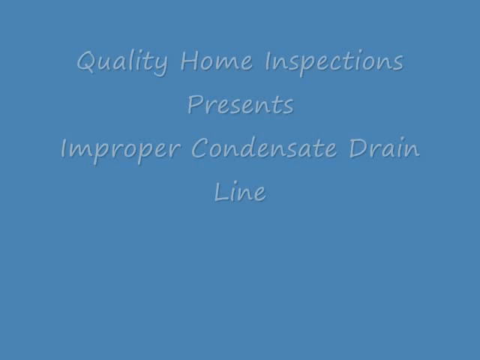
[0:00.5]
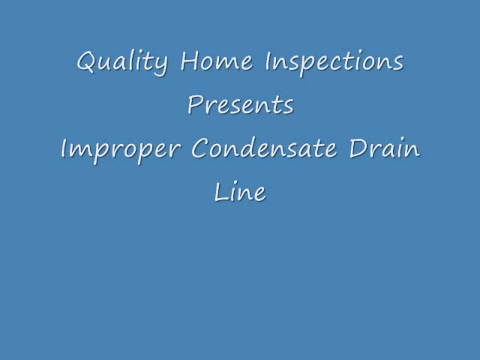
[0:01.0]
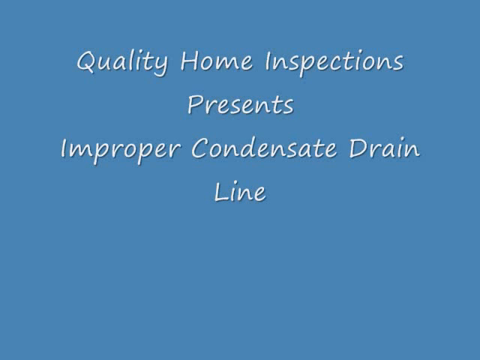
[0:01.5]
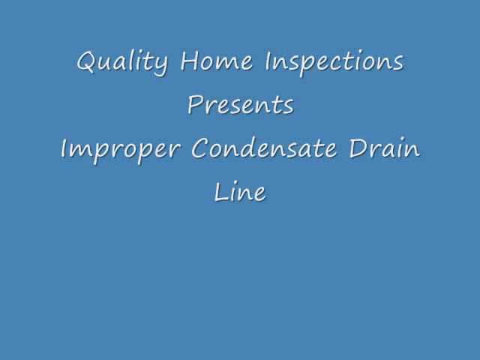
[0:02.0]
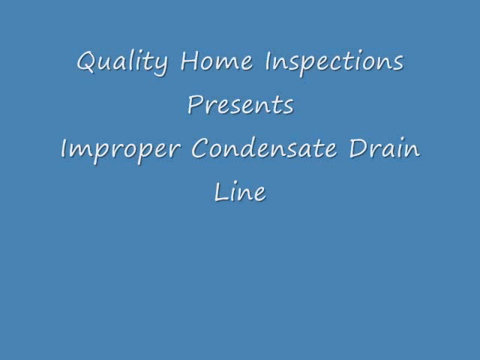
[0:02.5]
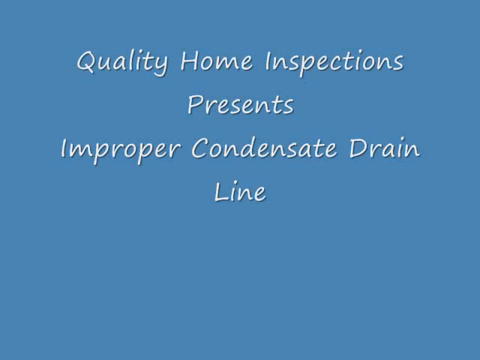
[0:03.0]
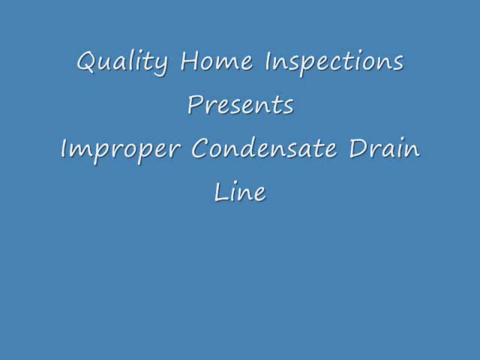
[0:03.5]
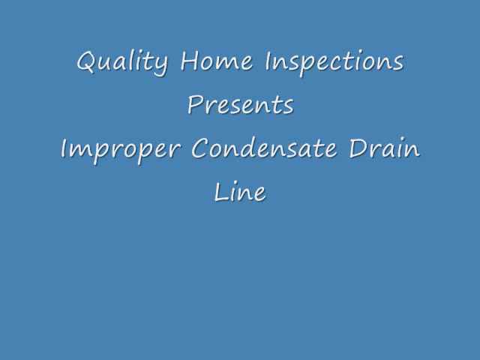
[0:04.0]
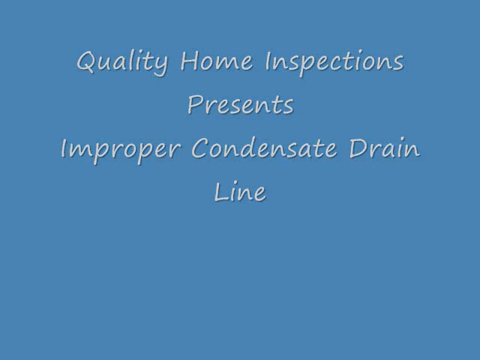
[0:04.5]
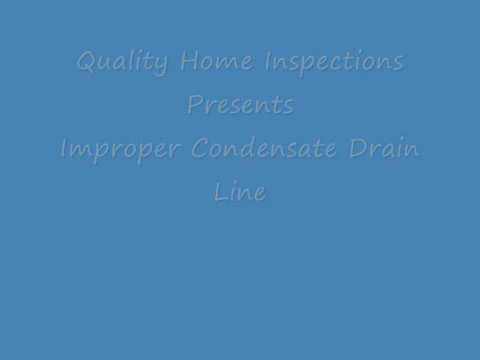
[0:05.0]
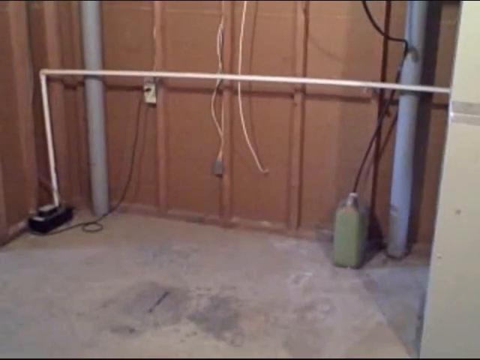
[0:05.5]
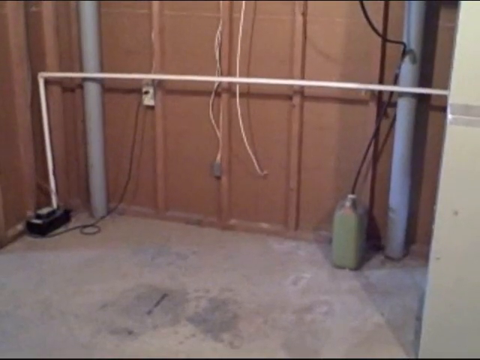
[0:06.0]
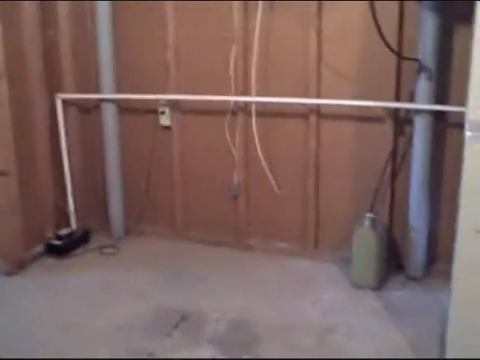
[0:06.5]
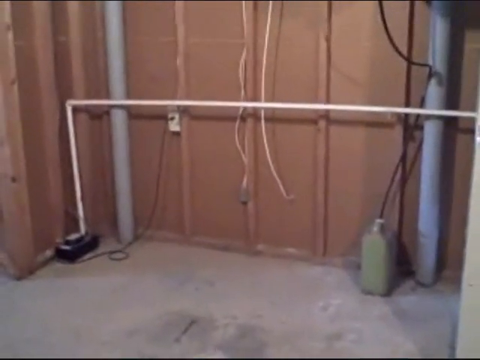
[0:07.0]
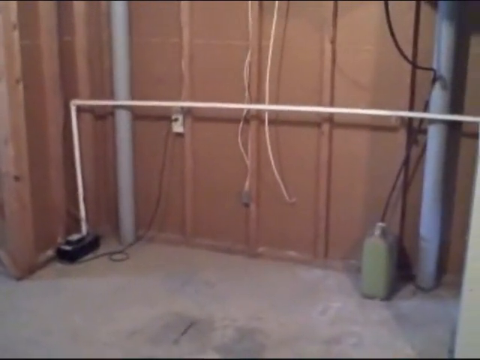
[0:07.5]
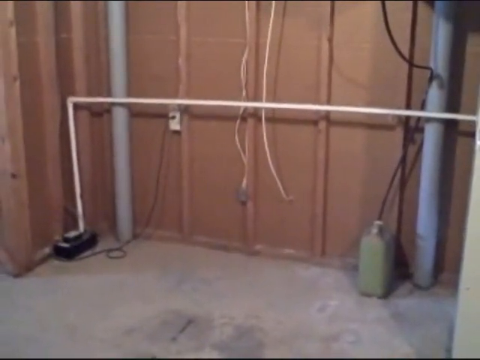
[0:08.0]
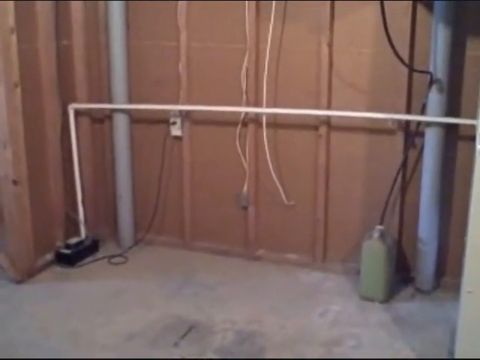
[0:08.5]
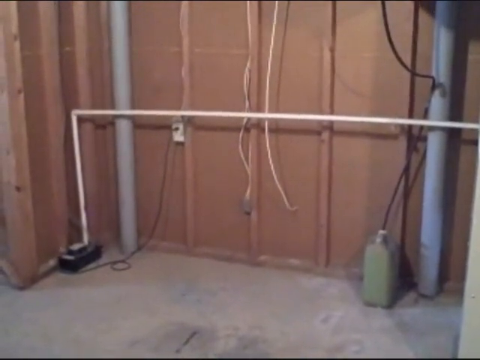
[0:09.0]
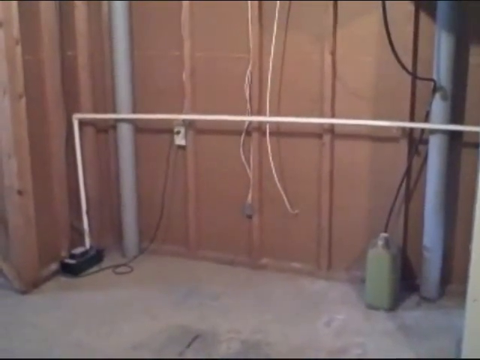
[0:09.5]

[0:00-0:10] A person shakes a phone while recording a room with some red interior in front and pipes and cables, which is presumably a basement, though the video does not show more of it. The camera shakes violently while filming.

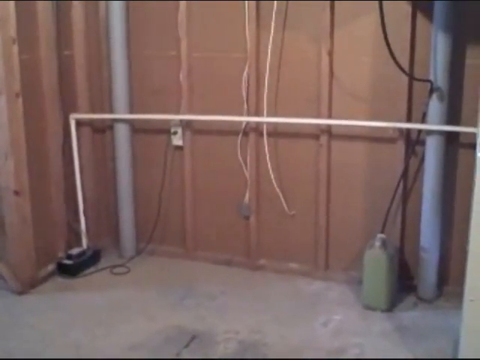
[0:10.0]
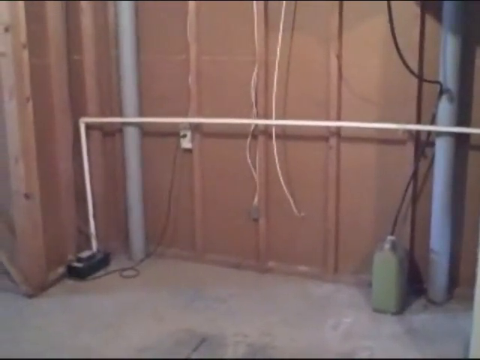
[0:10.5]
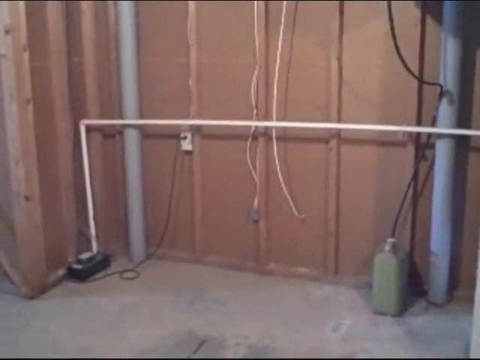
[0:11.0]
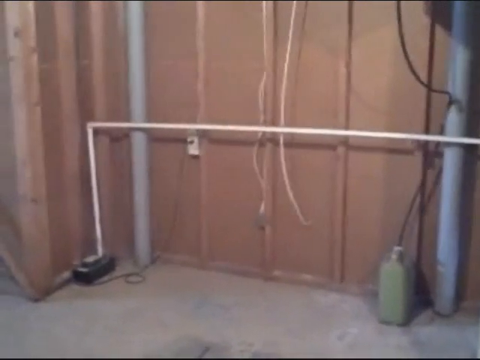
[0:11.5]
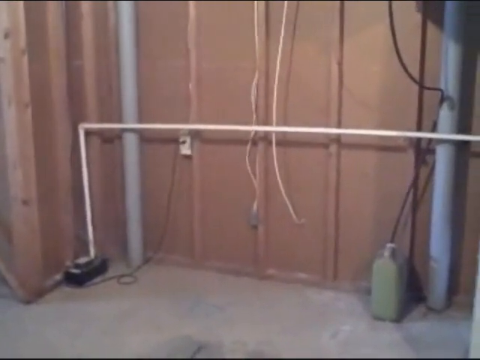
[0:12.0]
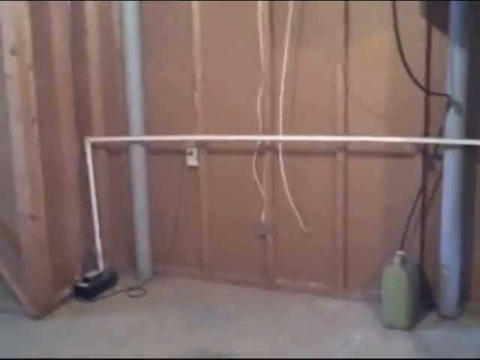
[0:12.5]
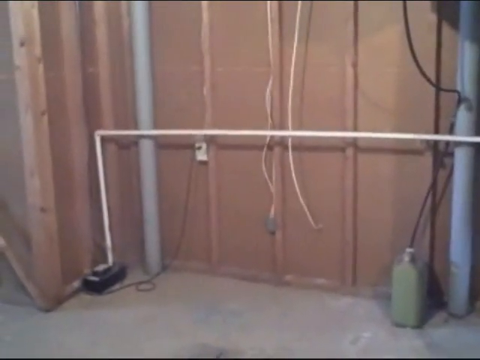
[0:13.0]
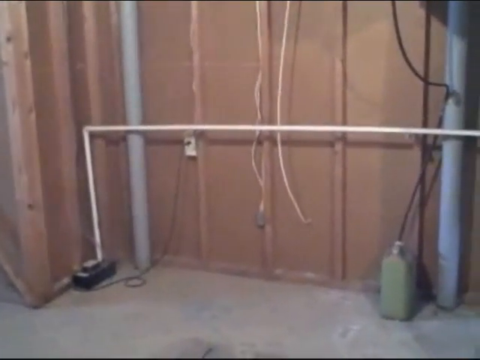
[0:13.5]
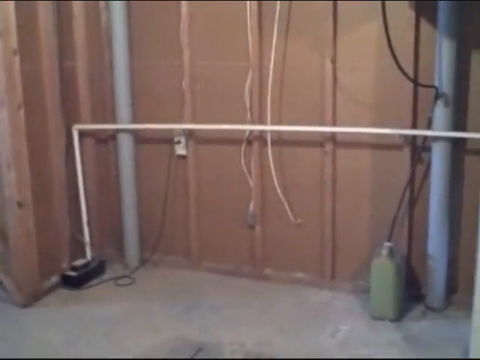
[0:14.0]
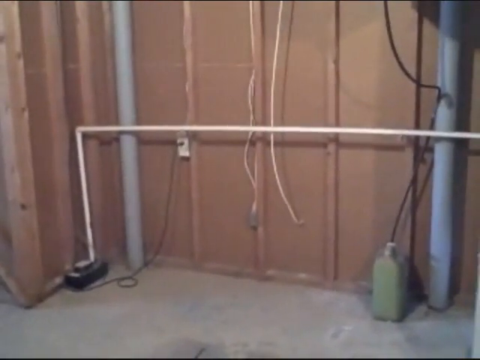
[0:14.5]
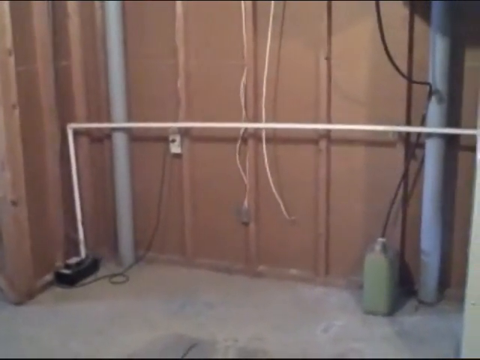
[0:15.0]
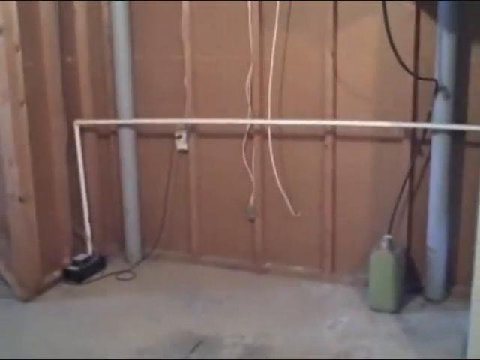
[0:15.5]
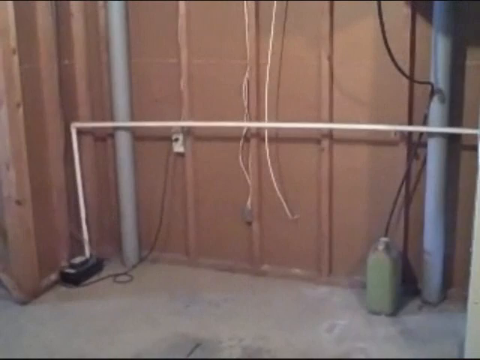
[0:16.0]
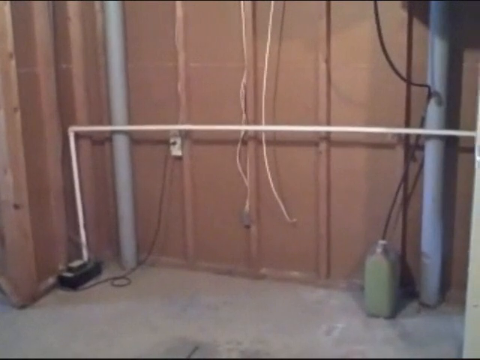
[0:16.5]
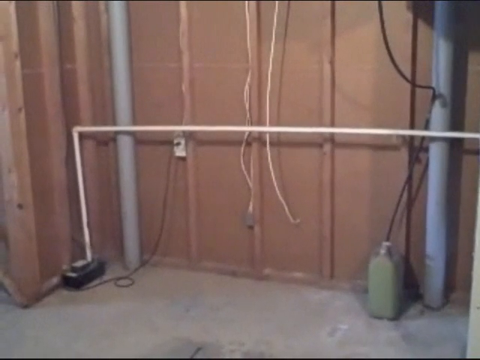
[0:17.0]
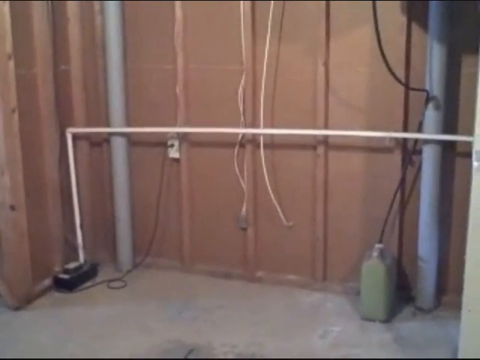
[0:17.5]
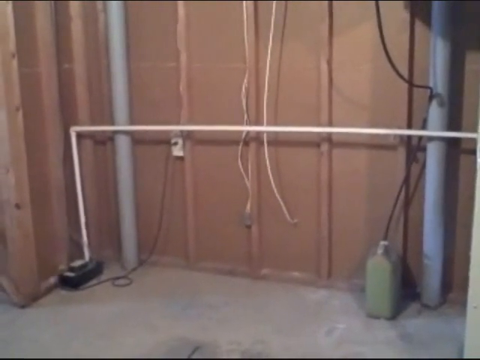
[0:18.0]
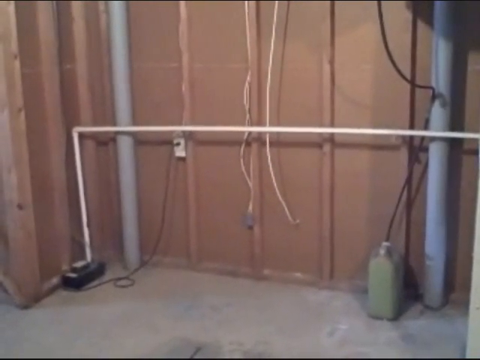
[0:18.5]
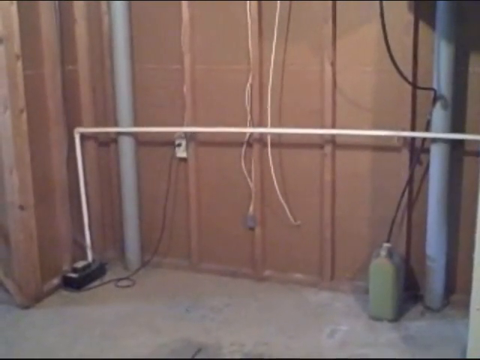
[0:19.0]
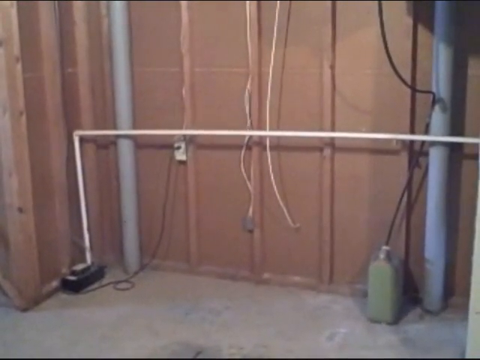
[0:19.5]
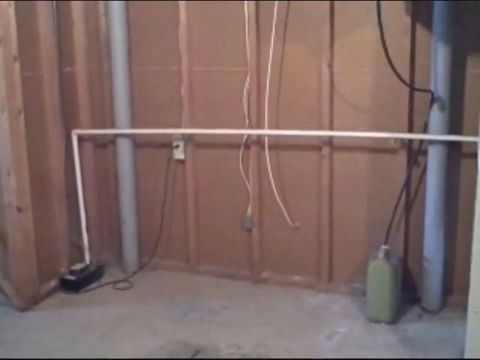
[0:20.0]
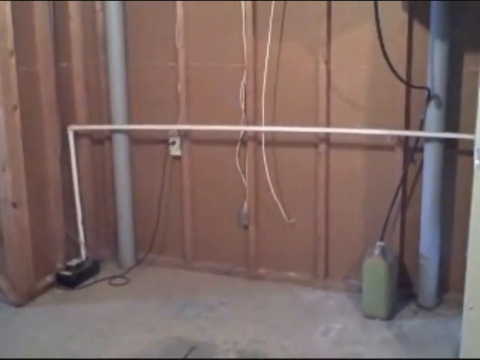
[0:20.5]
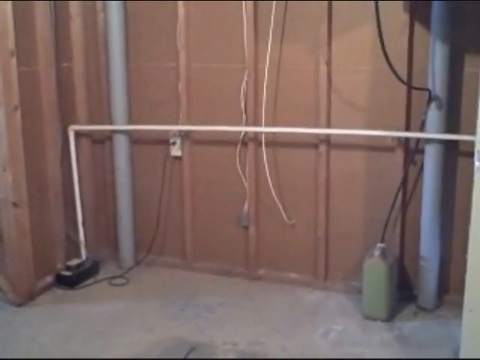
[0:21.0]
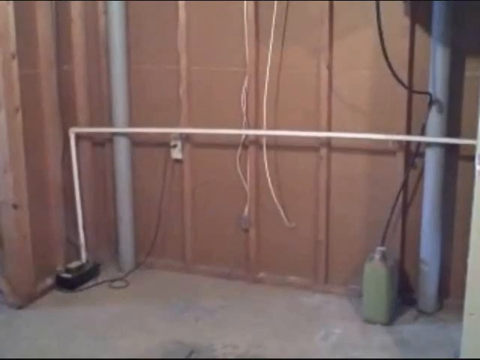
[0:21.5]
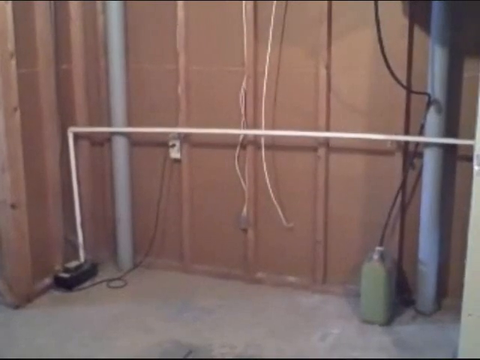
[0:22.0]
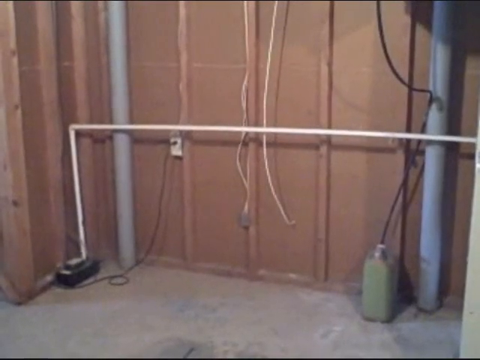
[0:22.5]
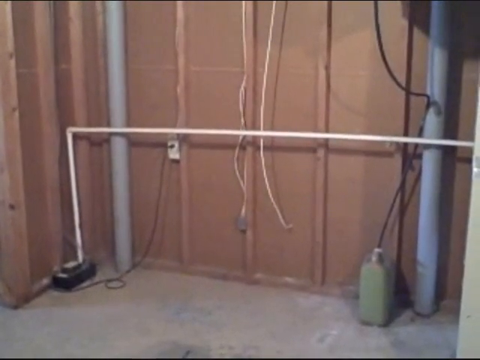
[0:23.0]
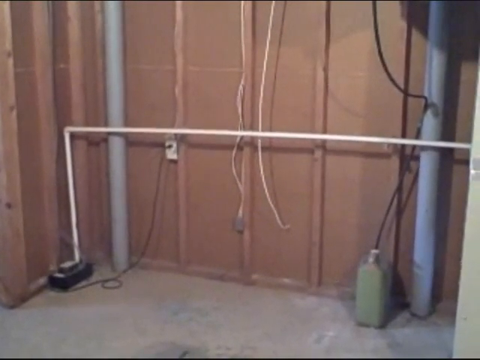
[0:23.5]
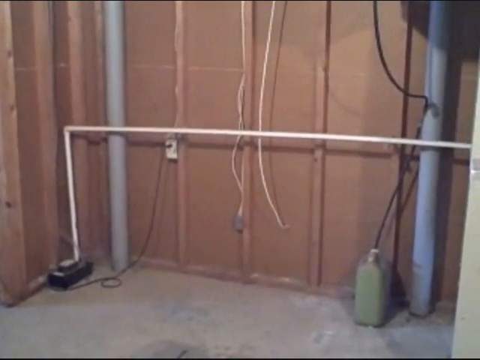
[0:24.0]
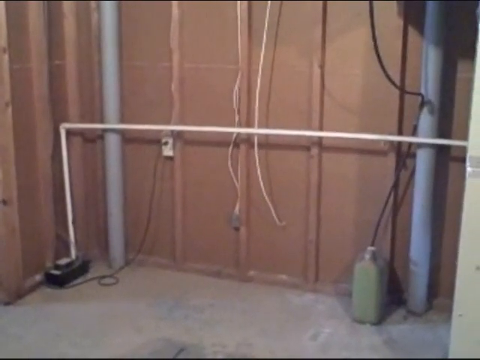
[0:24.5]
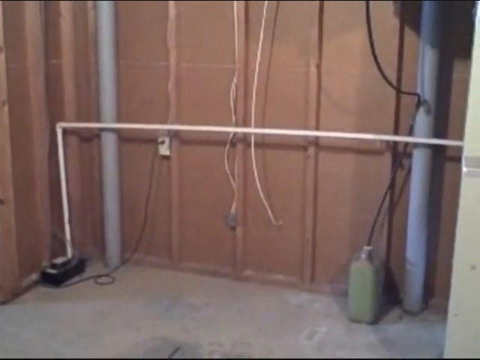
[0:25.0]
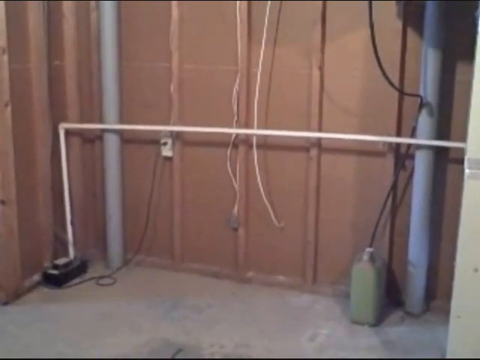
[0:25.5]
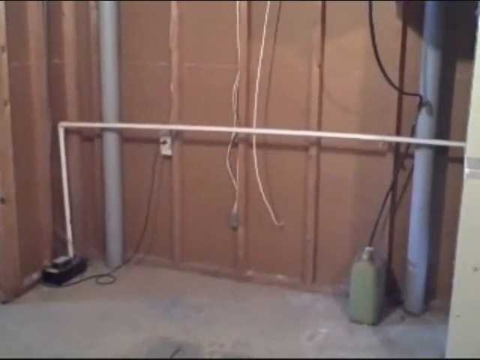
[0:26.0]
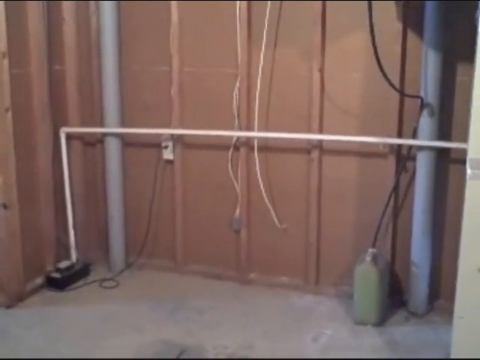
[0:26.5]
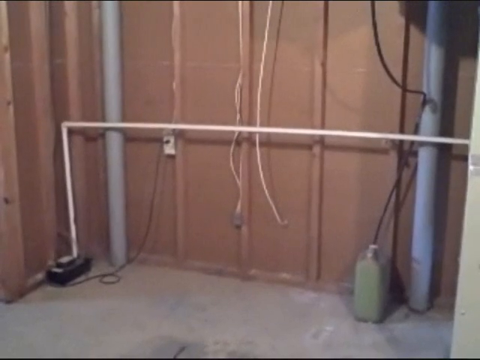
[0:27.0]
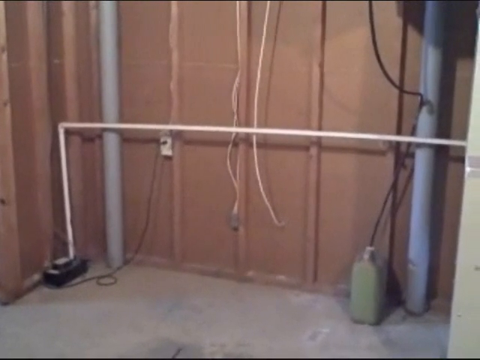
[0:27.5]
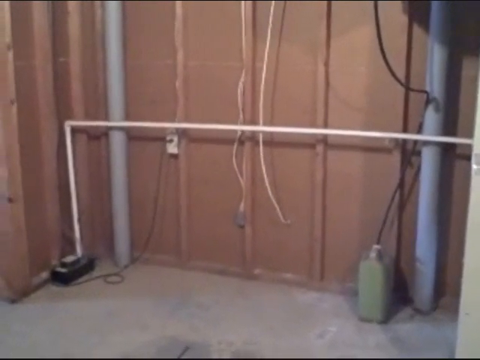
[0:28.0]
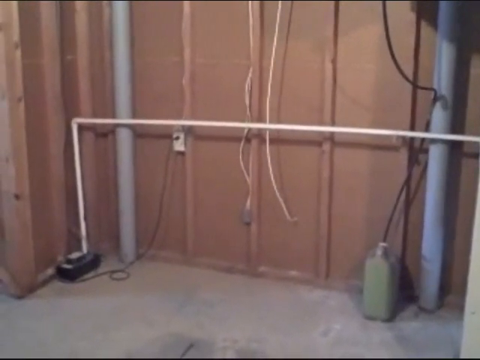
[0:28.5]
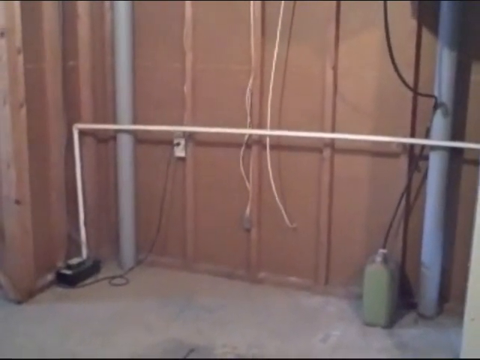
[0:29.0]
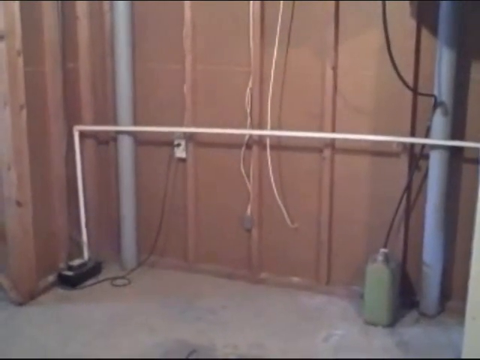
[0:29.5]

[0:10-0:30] The video is very low quality and shaky. In the foreground there are some wires, a plug, a gas canister, some green poles, and a white wire, with the foreground being metal and red. There is wire at the back, and the floor tile looks old and dirty. A flash appears while the camera shakes. A plug is plugged into a black something with a black wire, and wires stick out that are probably broken. There is old tiling, and apparently a person is taking a video of this particularly small room.